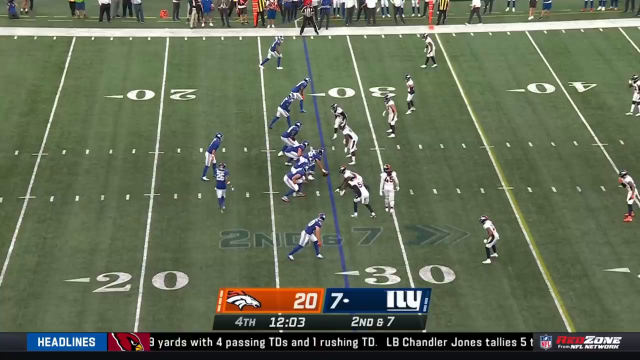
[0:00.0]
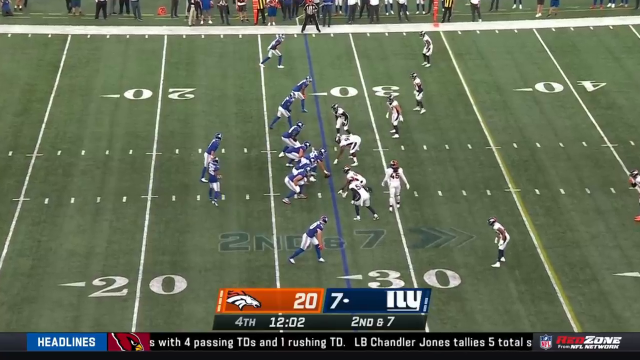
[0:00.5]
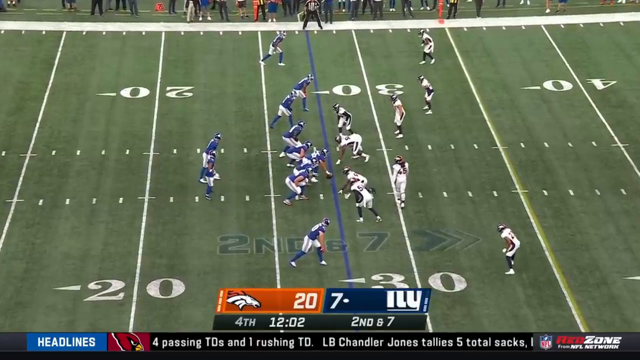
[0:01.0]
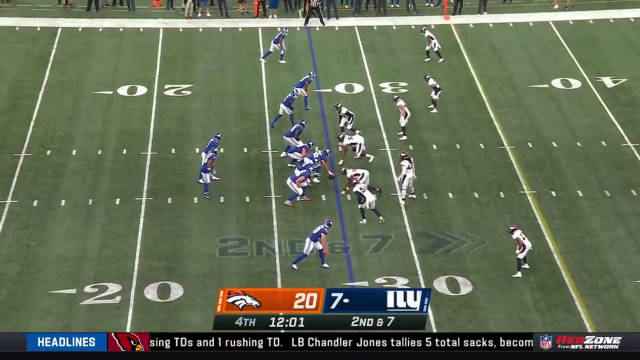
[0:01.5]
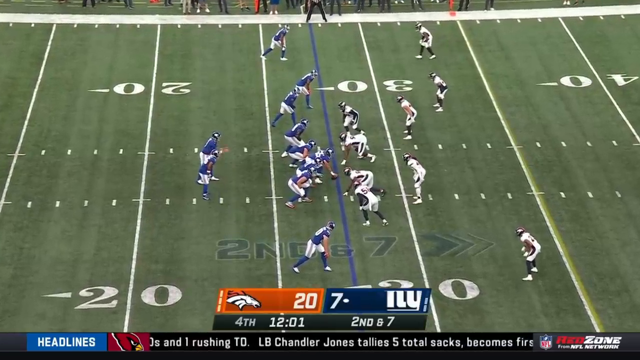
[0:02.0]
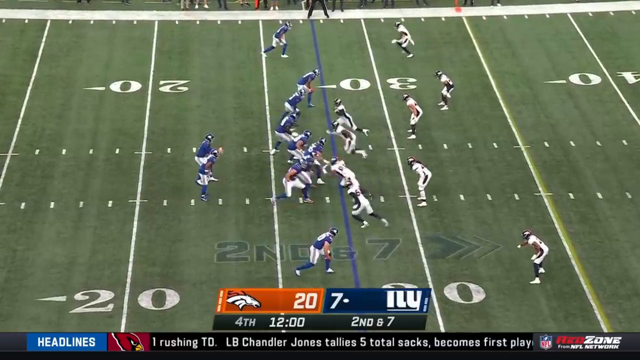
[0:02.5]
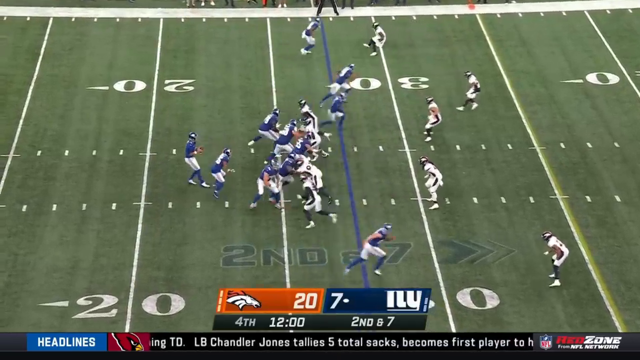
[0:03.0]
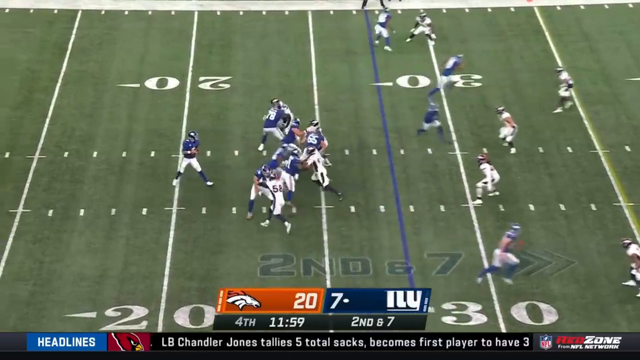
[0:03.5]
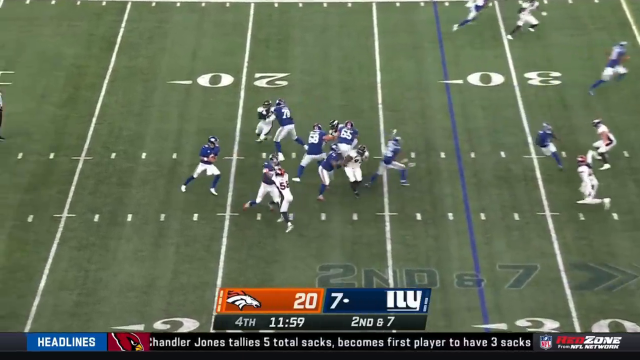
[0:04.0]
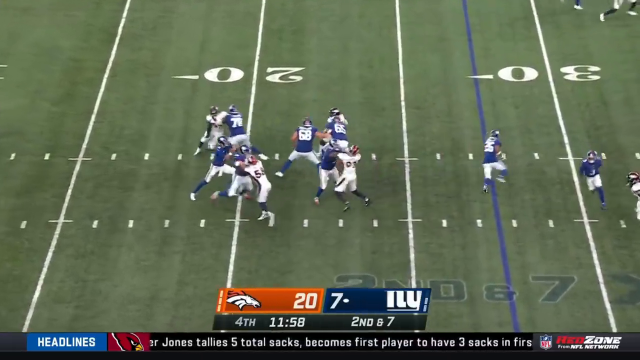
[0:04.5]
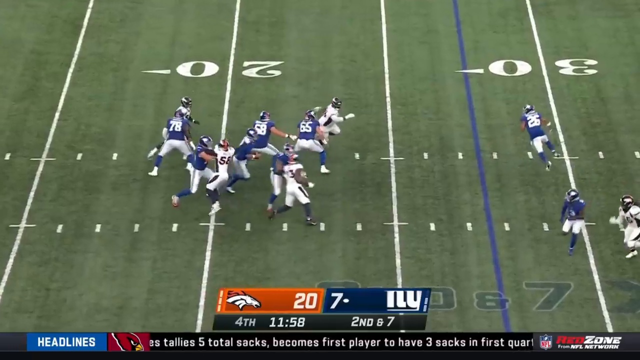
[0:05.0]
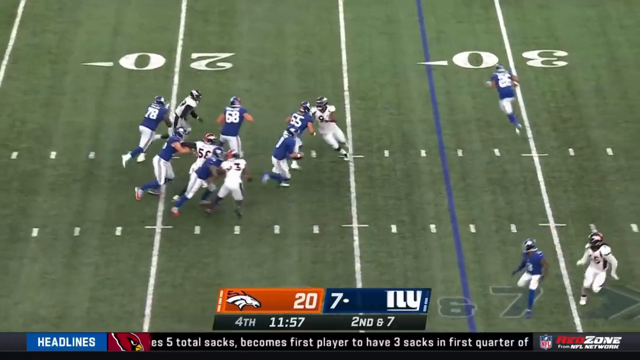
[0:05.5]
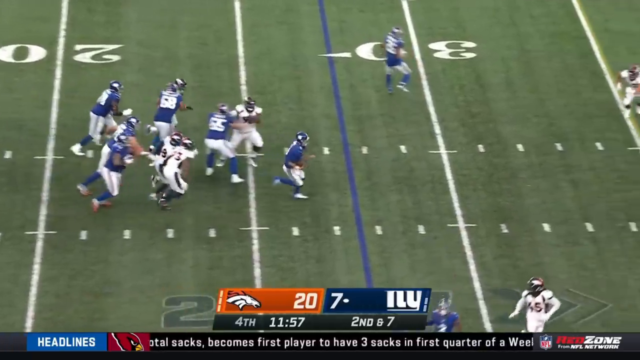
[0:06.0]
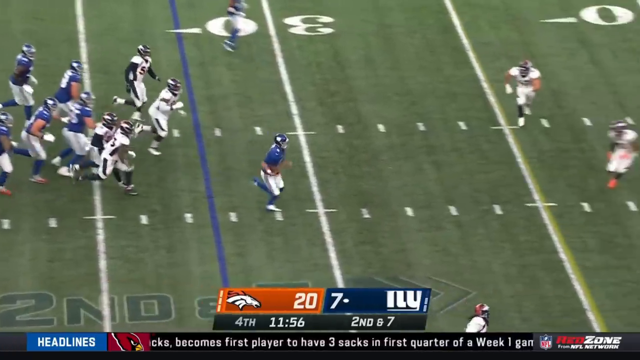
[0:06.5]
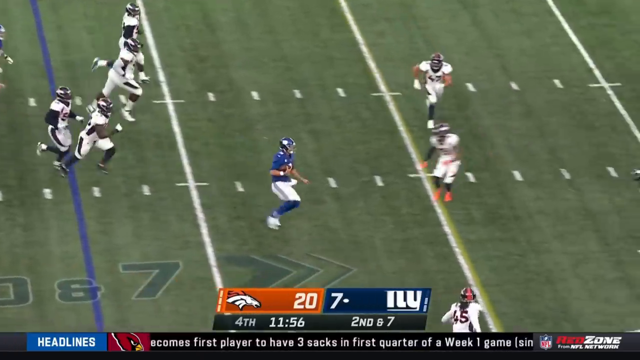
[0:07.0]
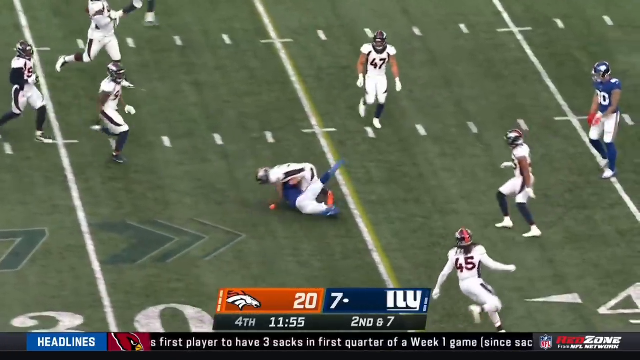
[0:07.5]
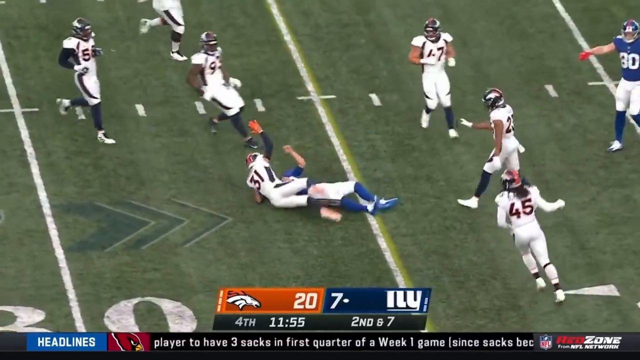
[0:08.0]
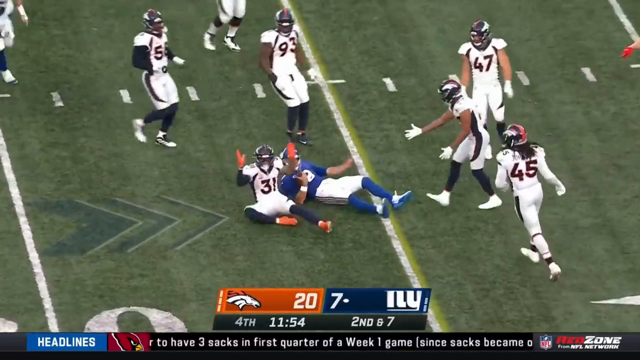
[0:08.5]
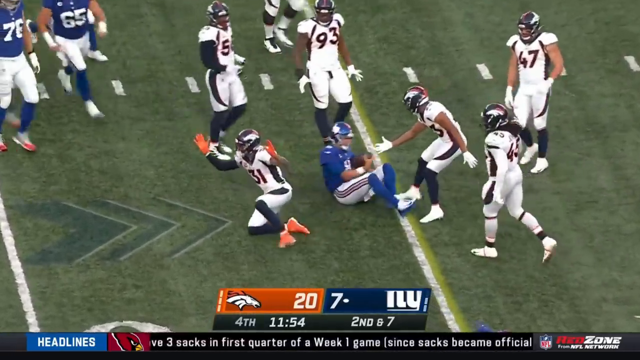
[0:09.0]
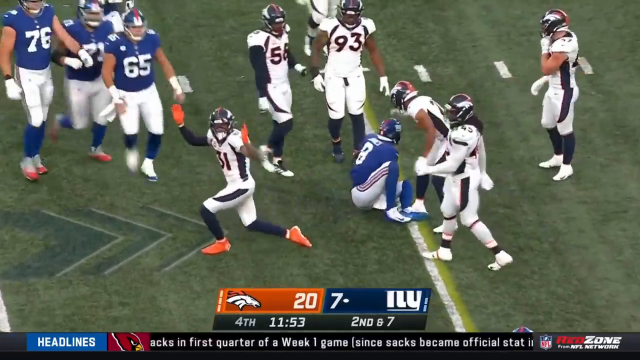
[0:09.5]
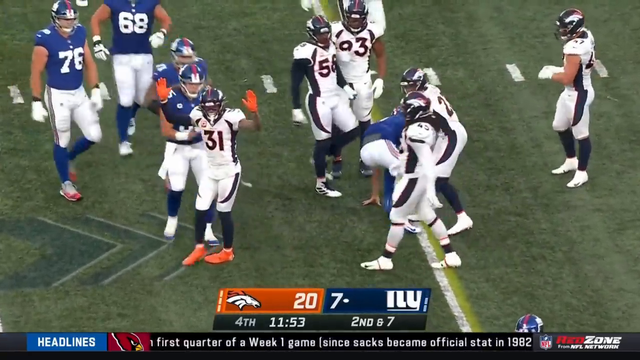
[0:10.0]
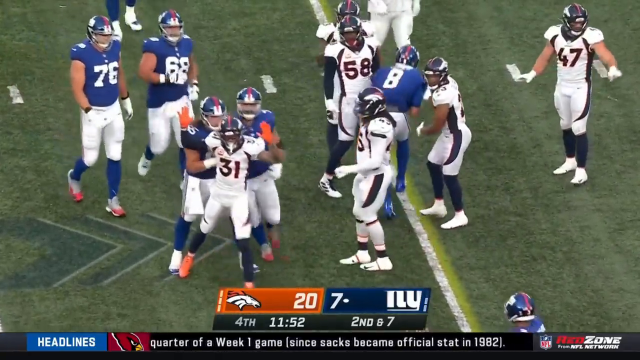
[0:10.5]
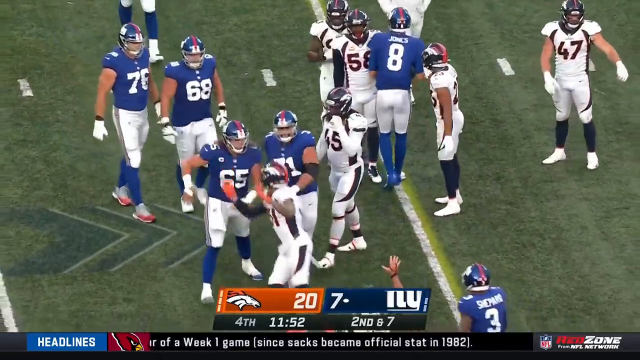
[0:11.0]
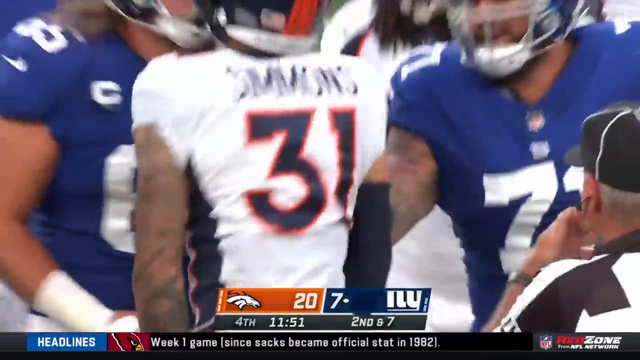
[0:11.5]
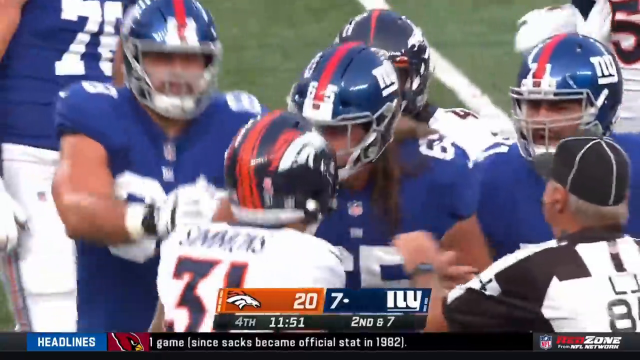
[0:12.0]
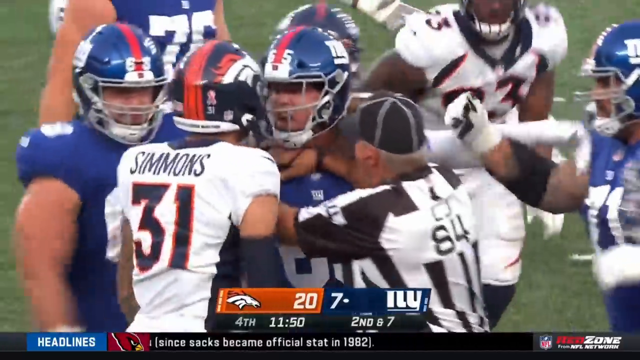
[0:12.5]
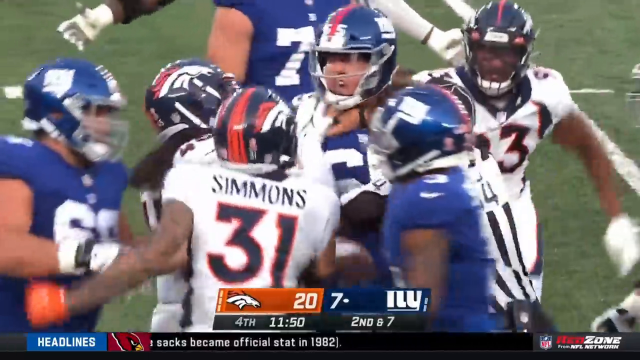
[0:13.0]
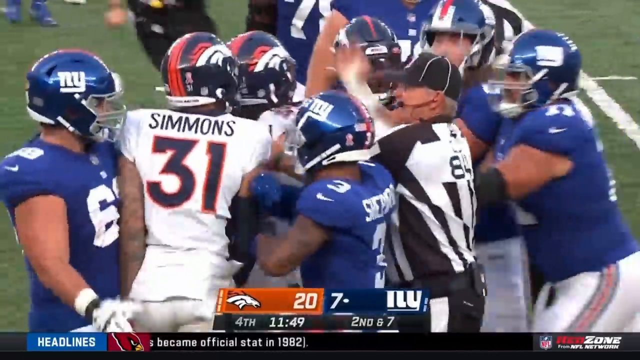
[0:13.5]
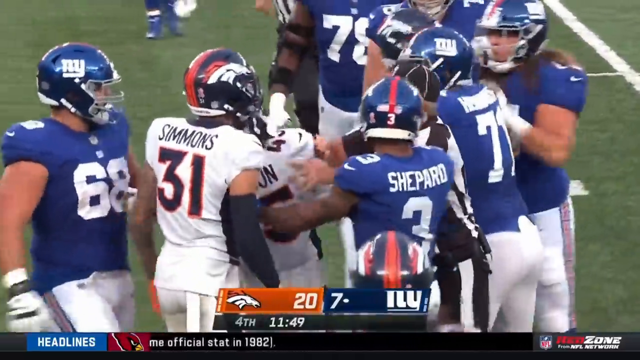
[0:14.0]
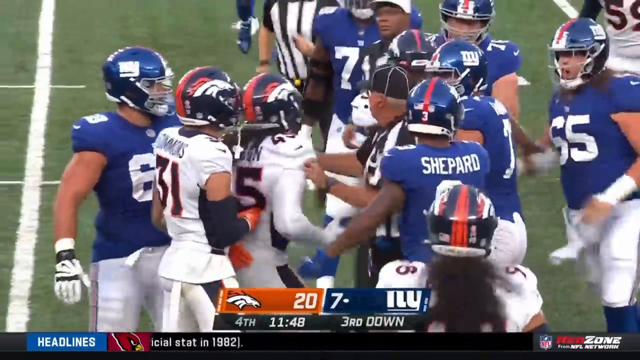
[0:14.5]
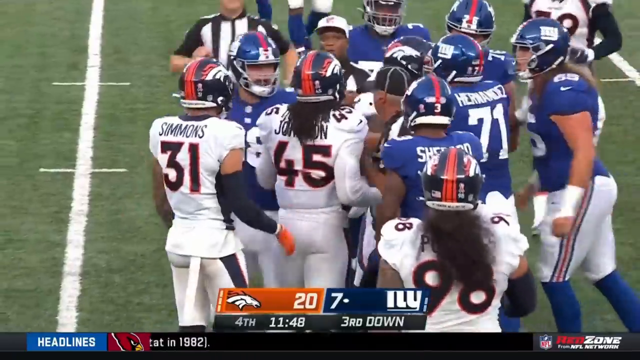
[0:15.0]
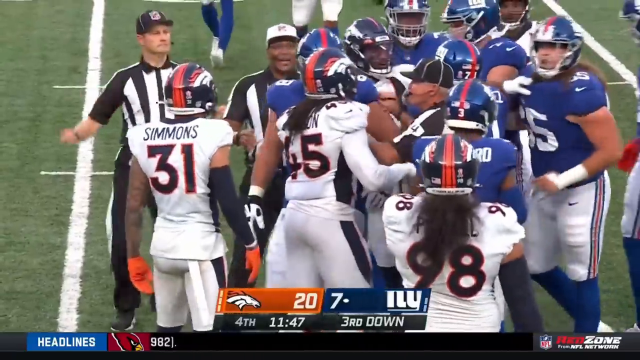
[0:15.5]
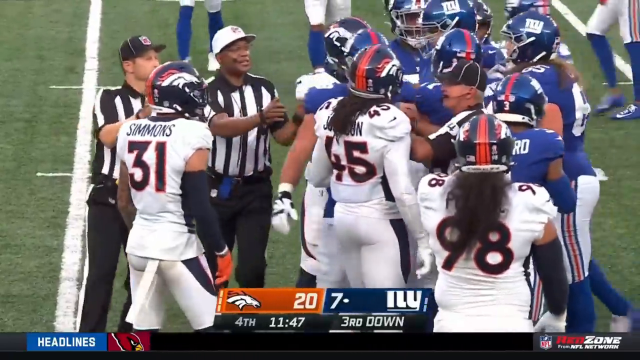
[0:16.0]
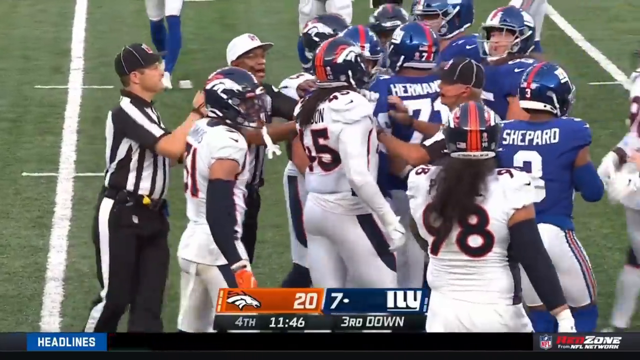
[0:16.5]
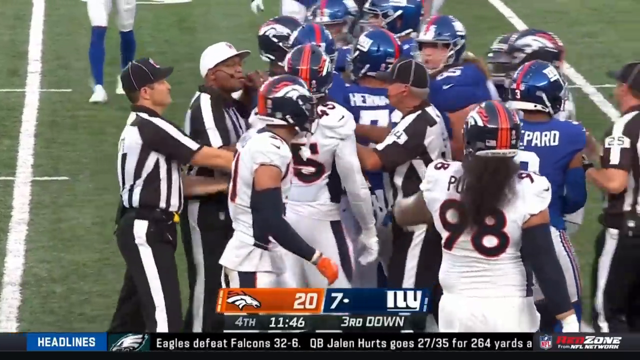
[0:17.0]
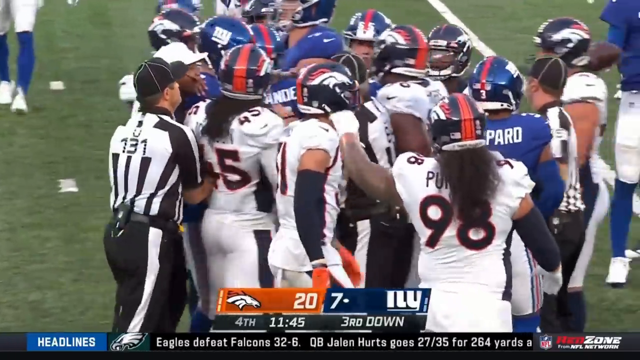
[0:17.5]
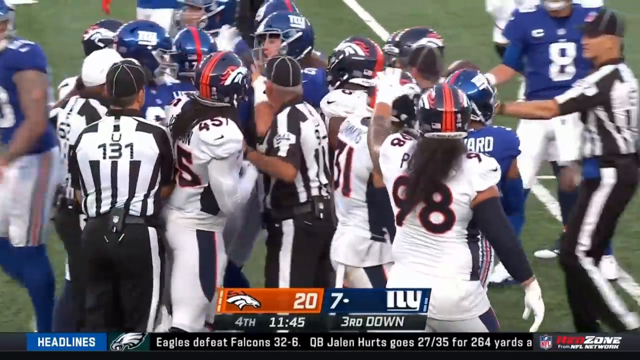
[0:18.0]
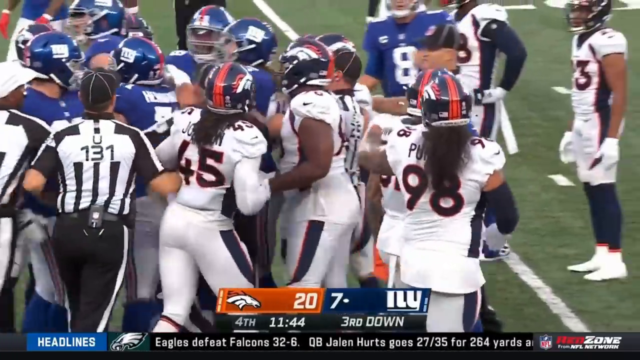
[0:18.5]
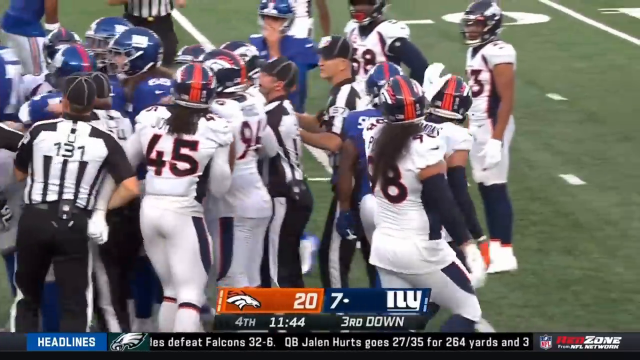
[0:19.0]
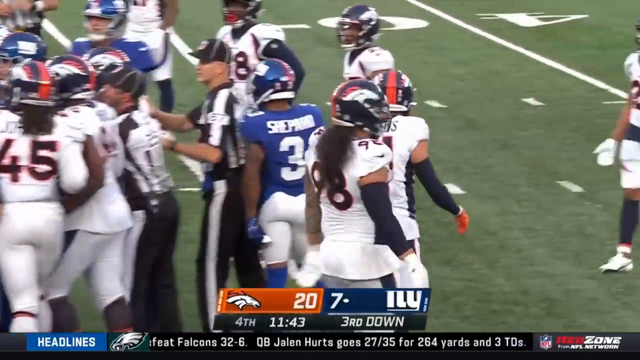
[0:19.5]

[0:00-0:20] An overhead view shows what looks like an NFL game, or some type of football game. A scoreboard at the bottom of the screen suggests it is an NFL game: a Denver Broncos logo is on the left side, and it looks like it says "NY" in white, apparently for the New York Giants. The score is 20 to 7. From the overhead view, it looks like the Broncos are in white jerseys and the Giants are in blue jerseys. The Giants have possession of the ball. The quarterback appears to rush forward with the ball and gets tackled, taking a hard hit from a Broncos player who hits him squarely in the helmet. As the quarterback gets up, many Giants players push the man who hit him; this man has "Simmons" on the back of his jersey and is number 31.